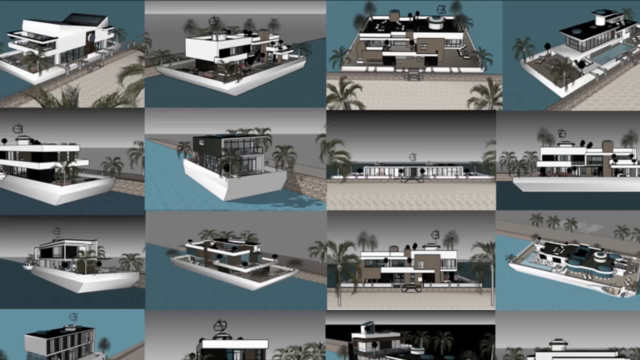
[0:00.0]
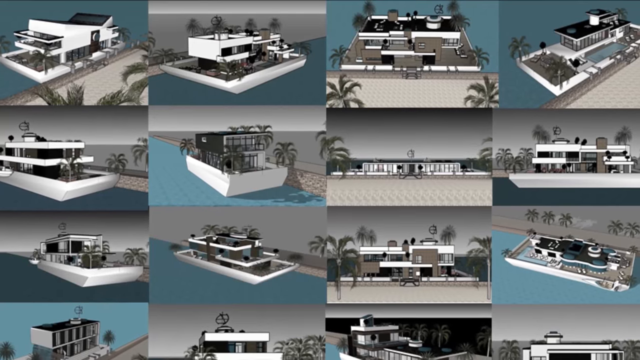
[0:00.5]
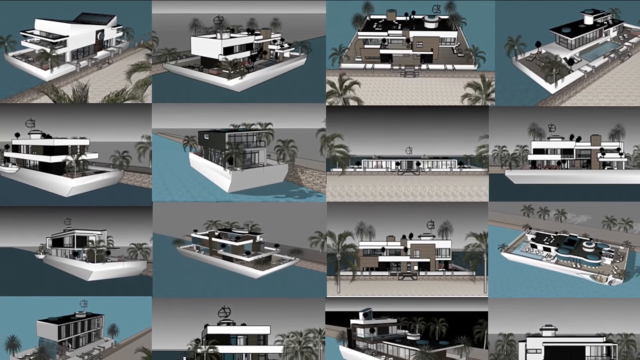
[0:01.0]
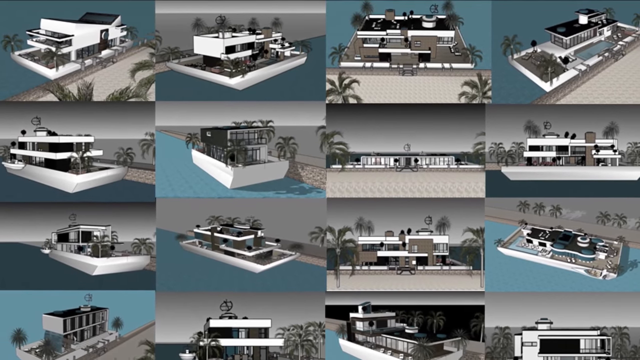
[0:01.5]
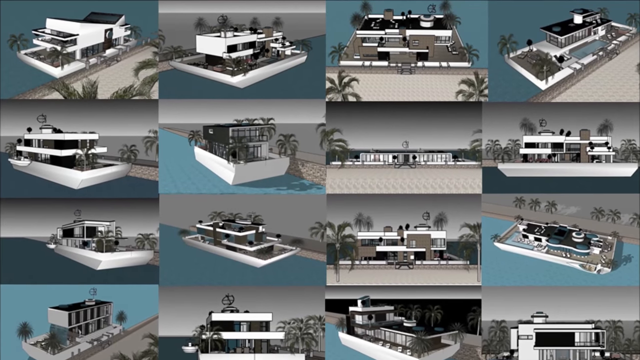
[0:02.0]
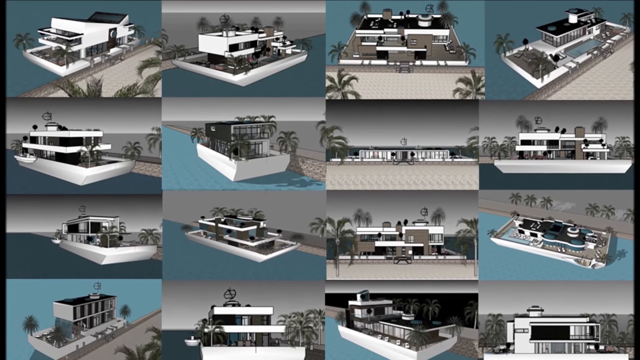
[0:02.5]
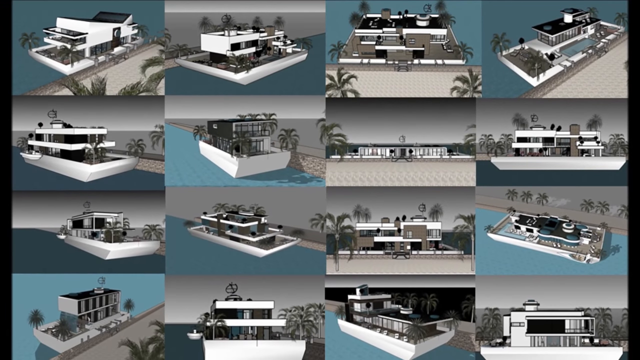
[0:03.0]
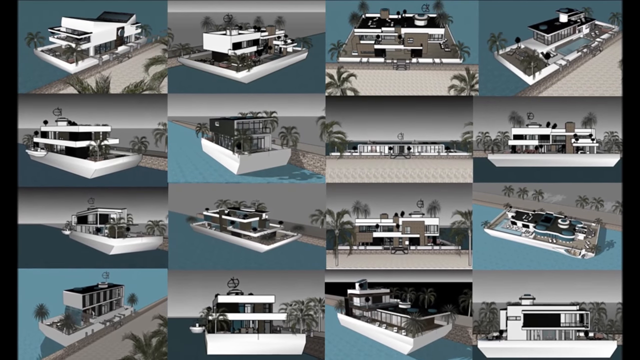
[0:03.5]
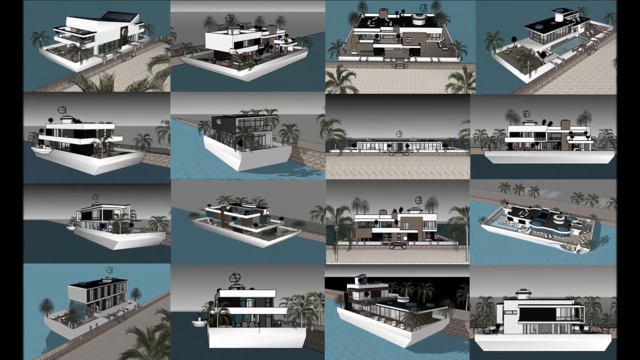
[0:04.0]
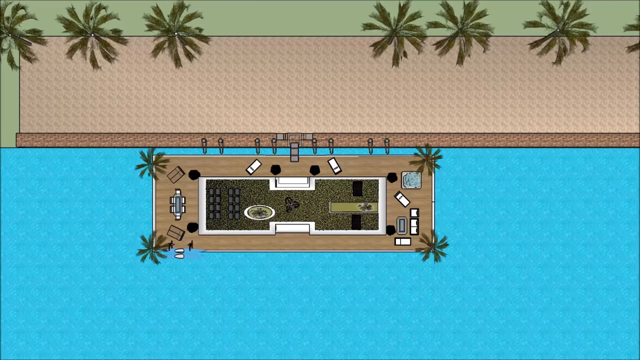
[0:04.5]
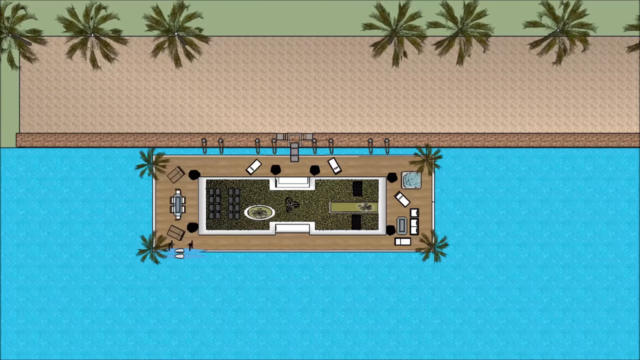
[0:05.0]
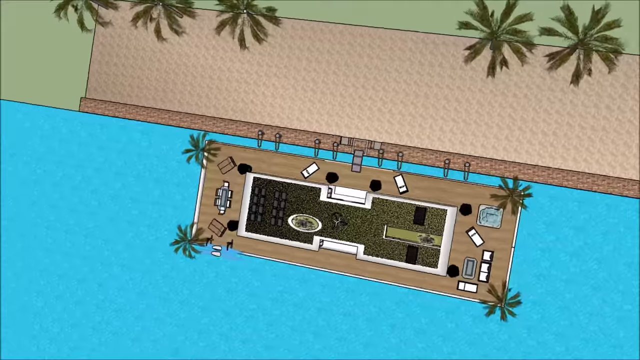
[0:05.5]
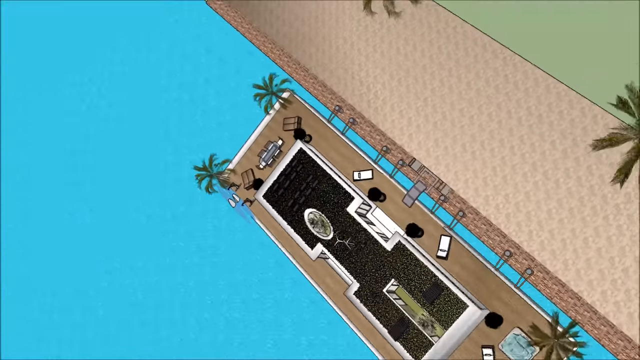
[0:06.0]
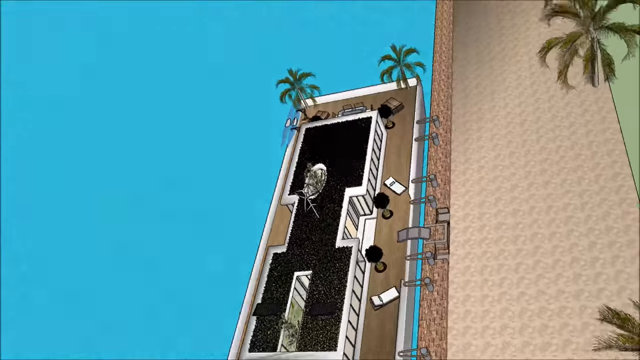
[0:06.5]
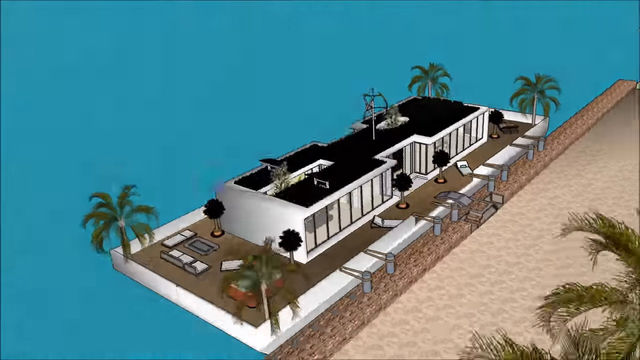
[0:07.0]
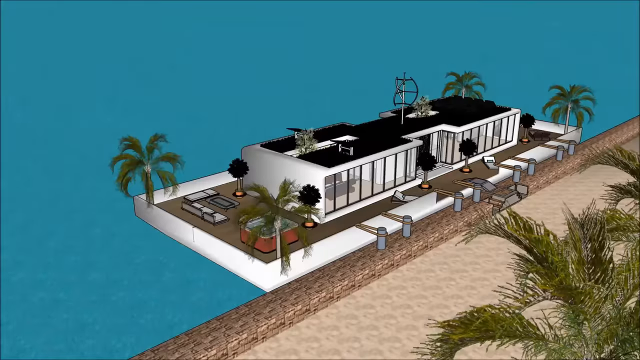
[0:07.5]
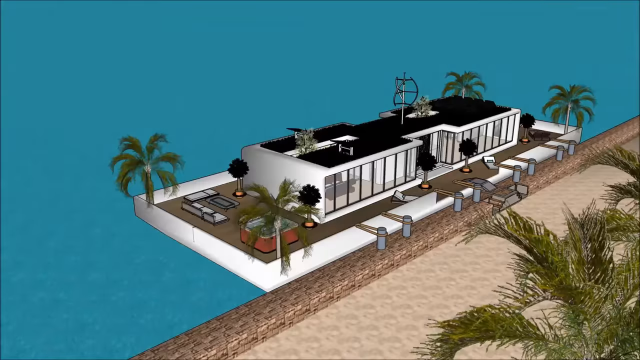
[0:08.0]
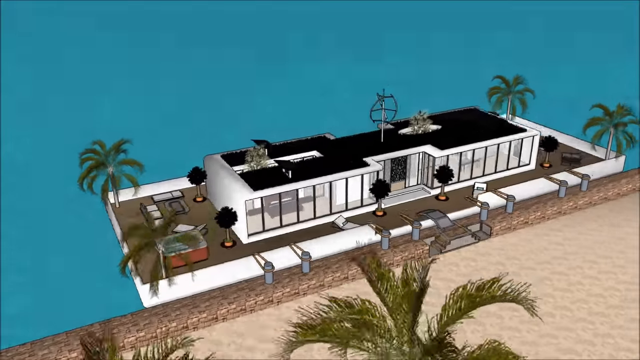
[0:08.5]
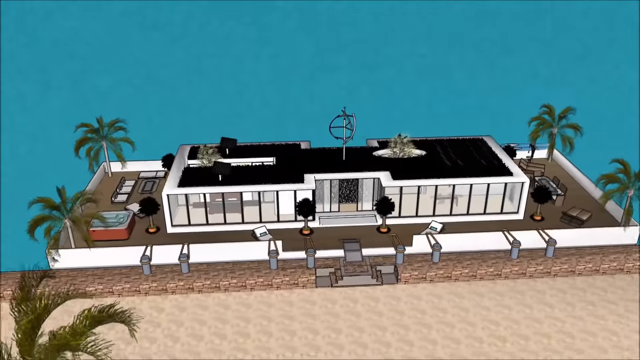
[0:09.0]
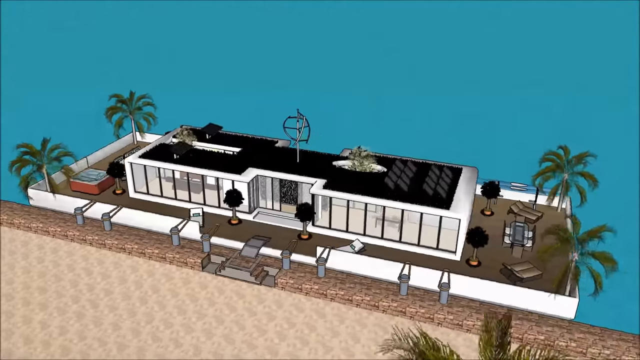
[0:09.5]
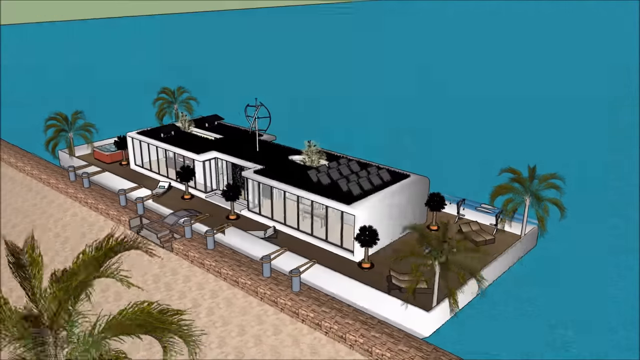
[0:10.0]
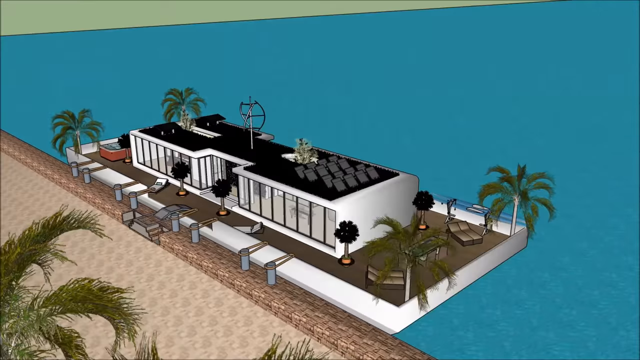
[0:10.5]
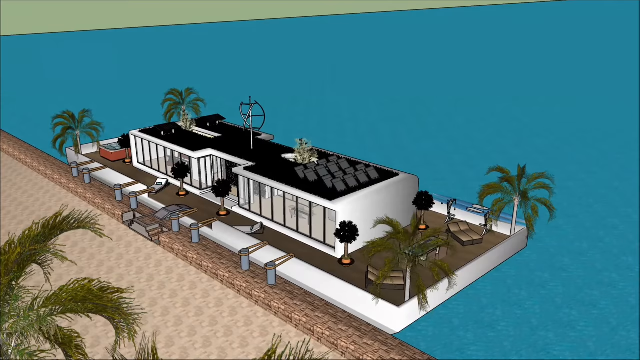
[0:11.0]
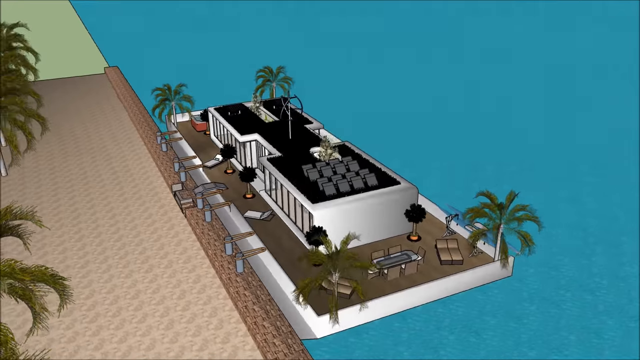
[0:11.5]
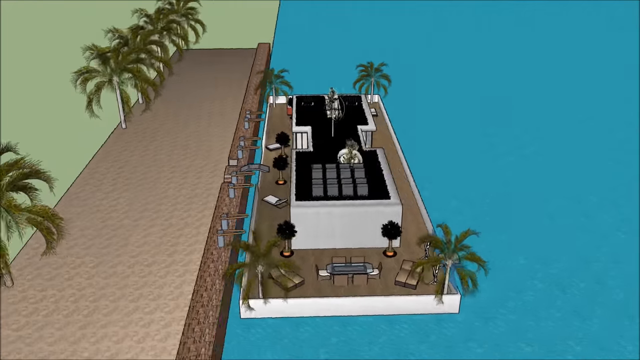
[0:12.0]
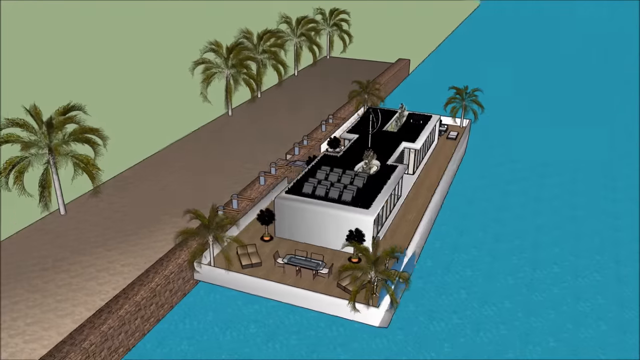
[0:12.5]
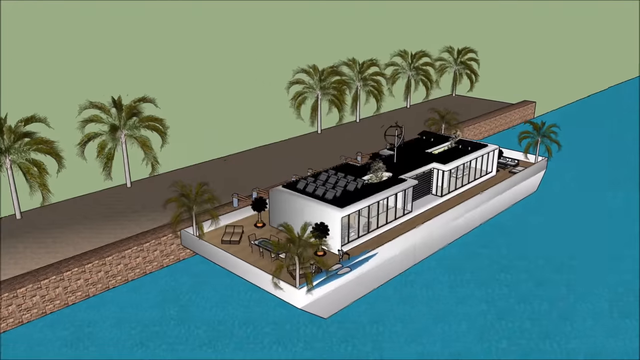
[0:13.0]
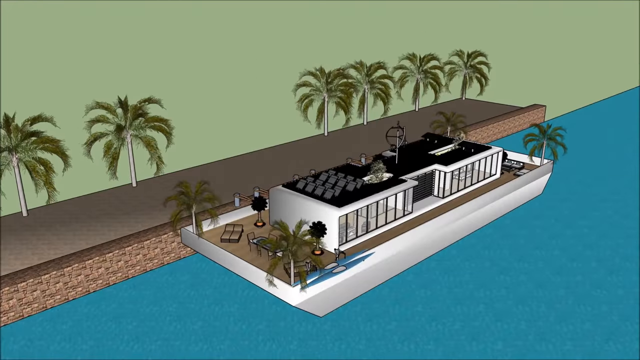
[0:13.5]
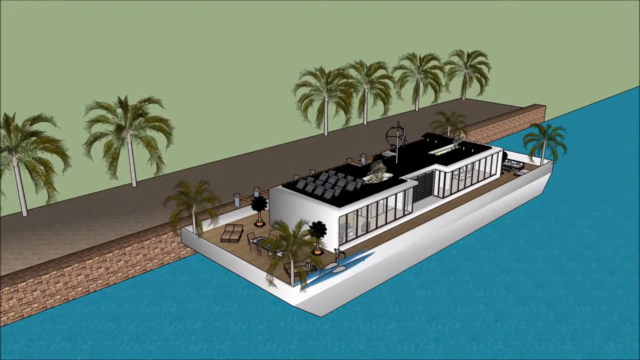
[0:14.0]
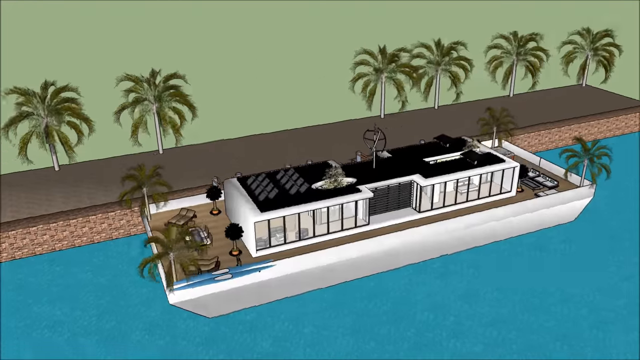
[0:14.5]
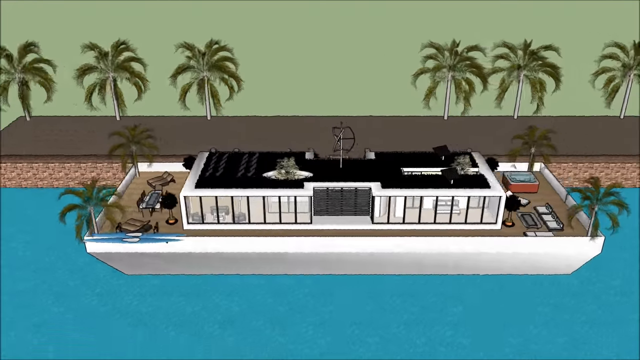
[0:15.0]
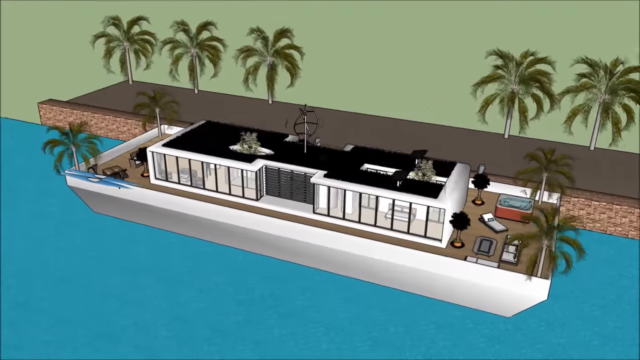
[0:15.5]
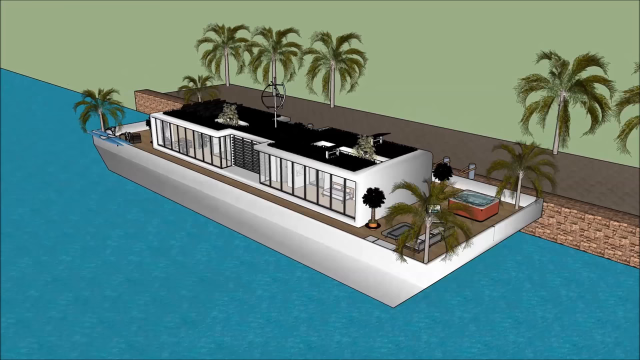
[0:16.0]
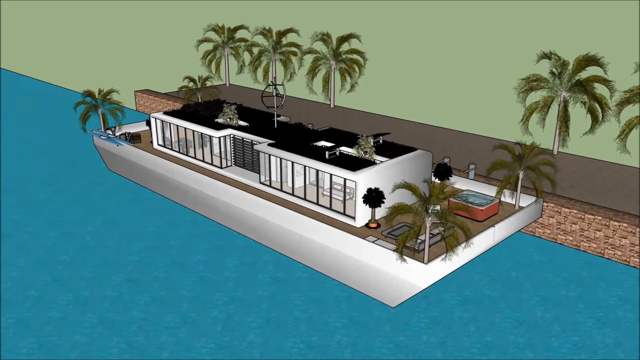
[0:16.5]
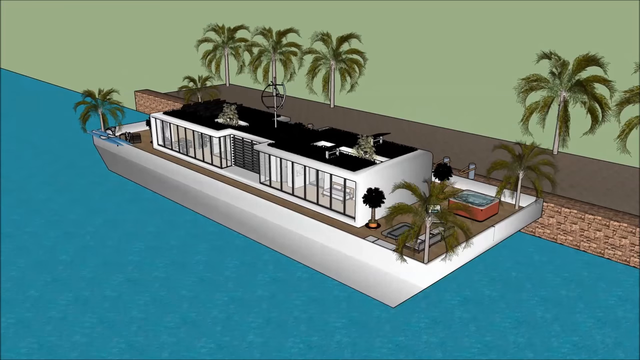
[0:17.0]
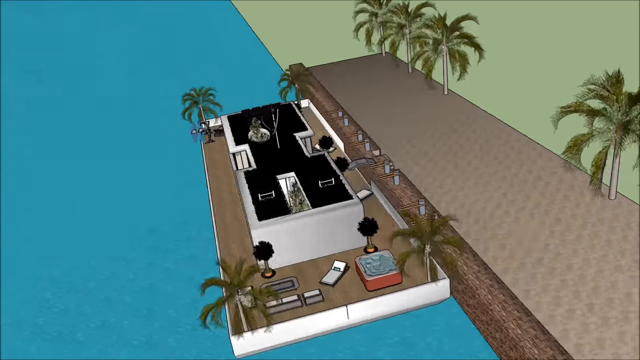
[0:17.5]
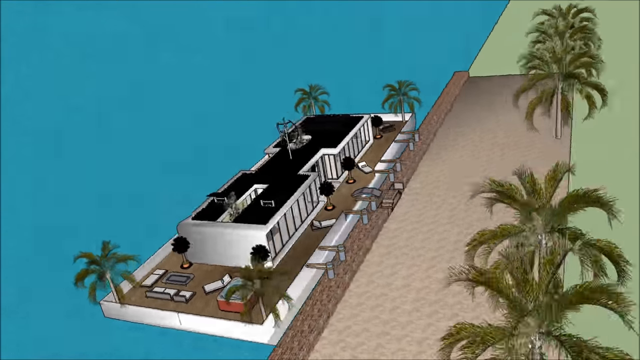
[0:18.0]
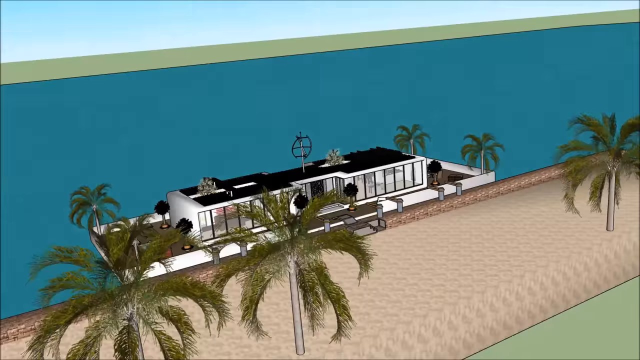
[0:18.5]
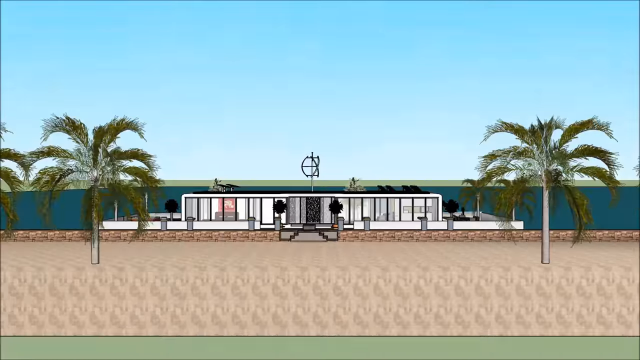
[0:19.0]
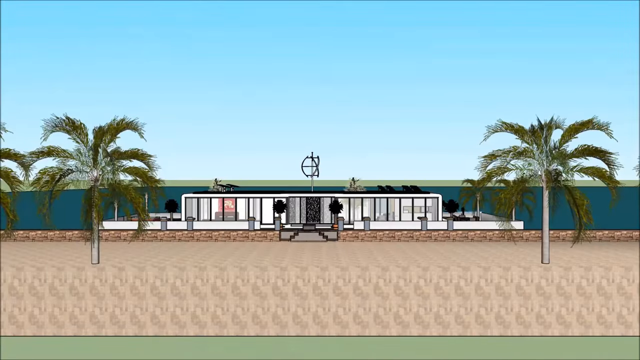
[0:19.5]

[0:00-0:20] What looks to be multiple pictures of a white beach home appear, with palm trees kind of sticking out of some areas. A lot of water surrounds it, so it kind of looks like a boat and a house at the same time. The view zooms out to show more pictures before transitioning to another view of a lot of water and an aerial view of the top of the design, with a dock that has a bunch of palm trees near it. The camera twists to show the bottom front, where there are many glass windows, then turns to show the other side. Some little chairs for relaxing surround the building. There is some stuff at the top of the roof, a large body of water surrounds the building, and some areas of the ground are brown and kind of look like sand.